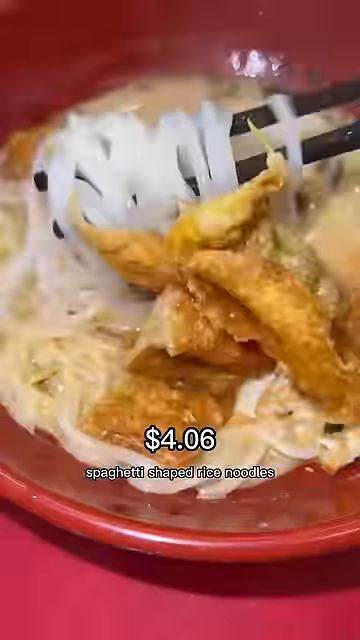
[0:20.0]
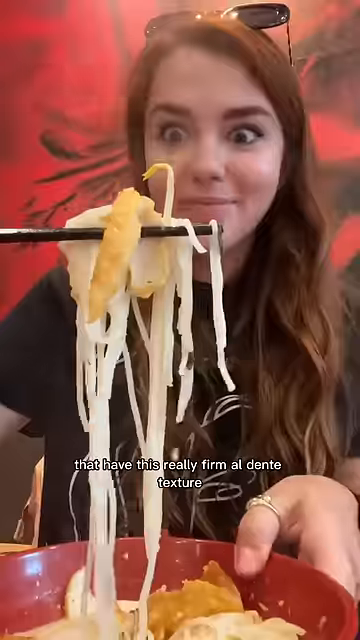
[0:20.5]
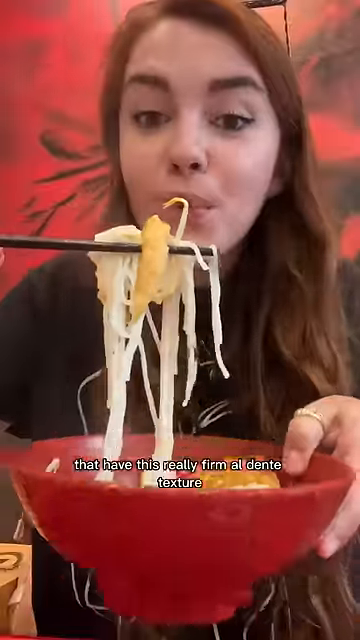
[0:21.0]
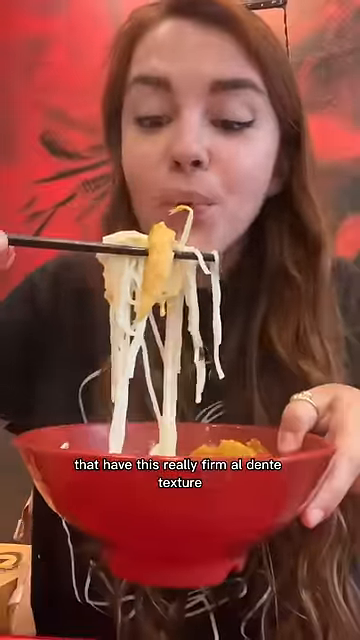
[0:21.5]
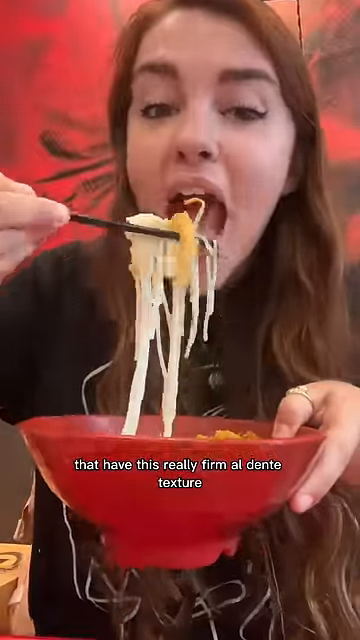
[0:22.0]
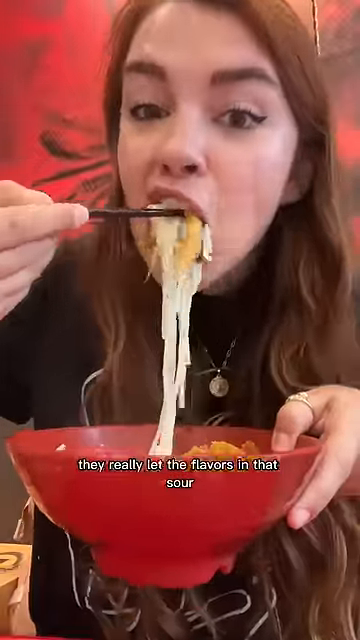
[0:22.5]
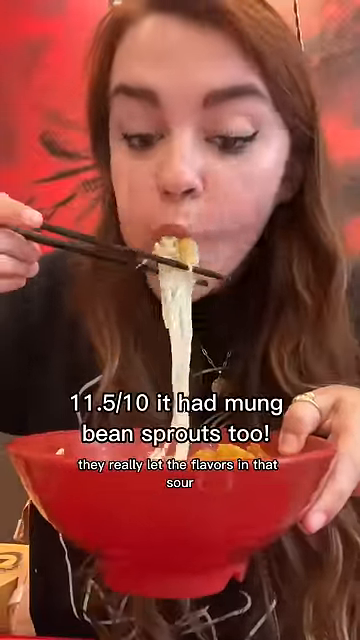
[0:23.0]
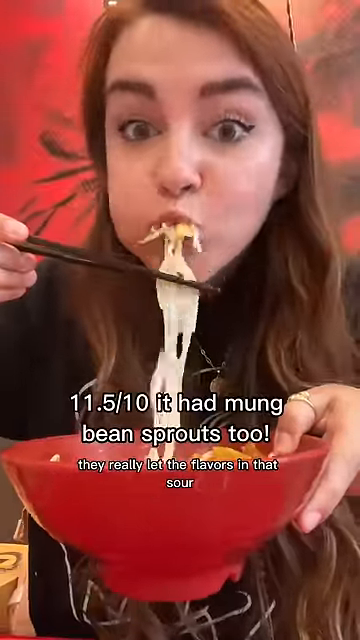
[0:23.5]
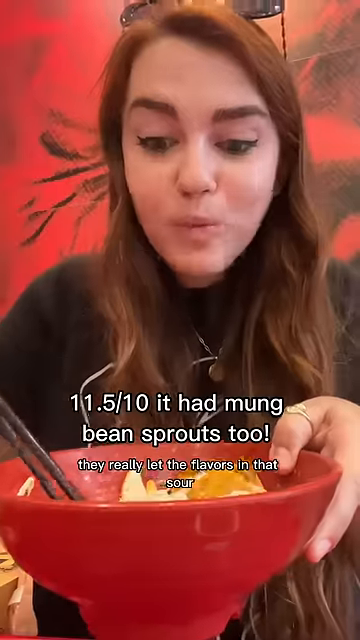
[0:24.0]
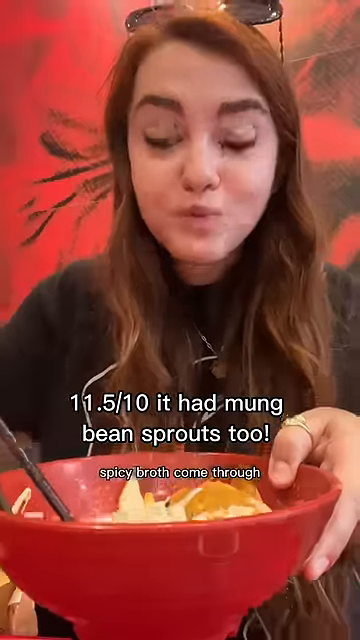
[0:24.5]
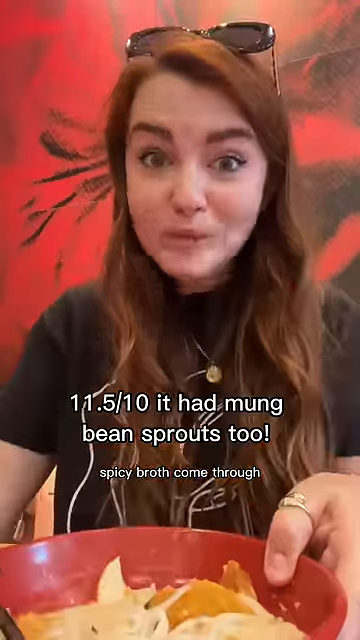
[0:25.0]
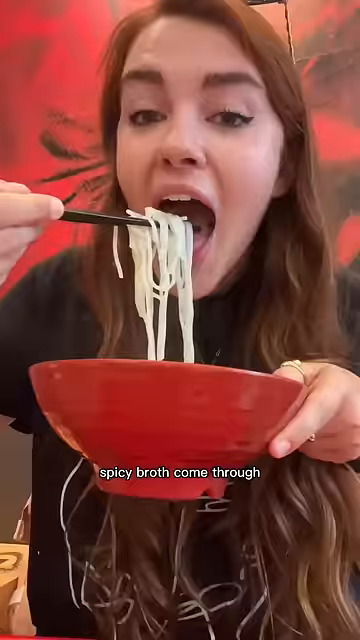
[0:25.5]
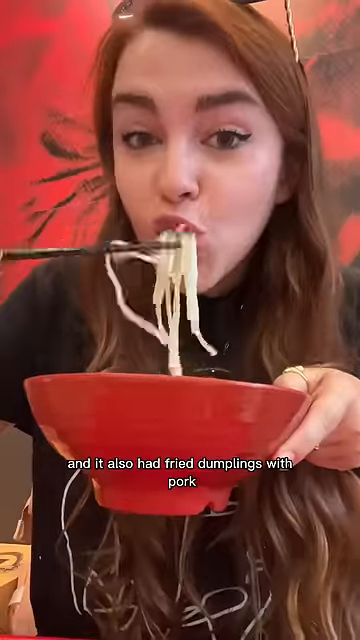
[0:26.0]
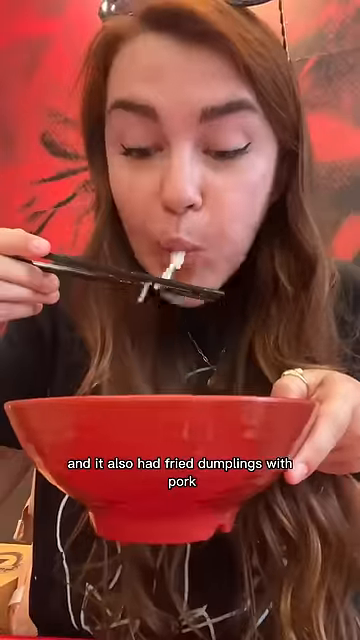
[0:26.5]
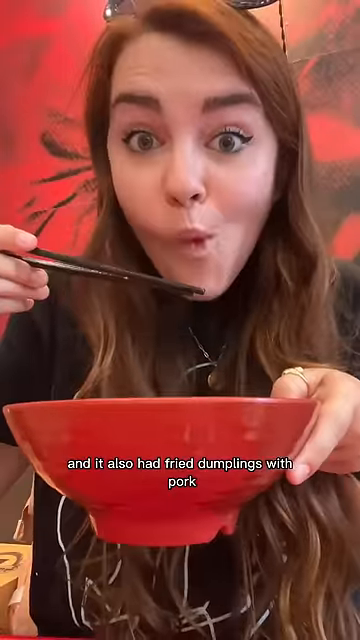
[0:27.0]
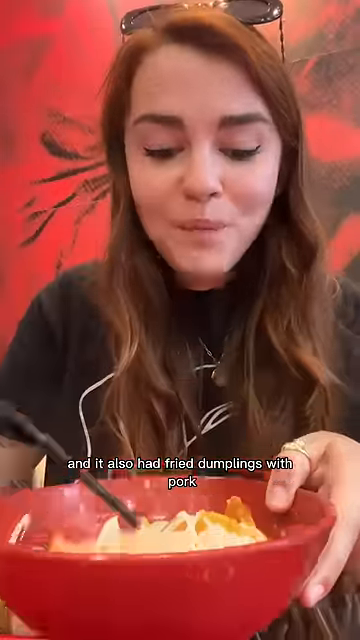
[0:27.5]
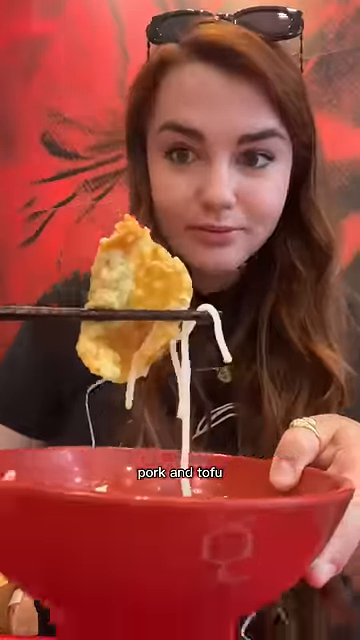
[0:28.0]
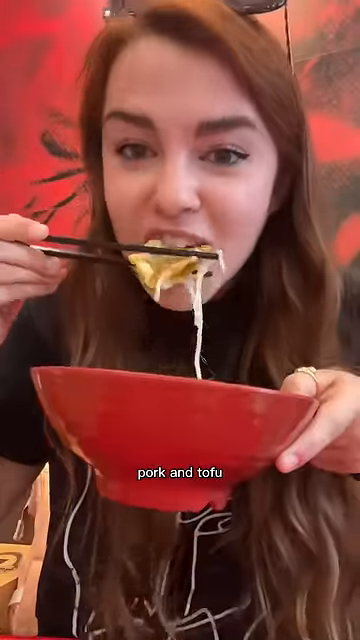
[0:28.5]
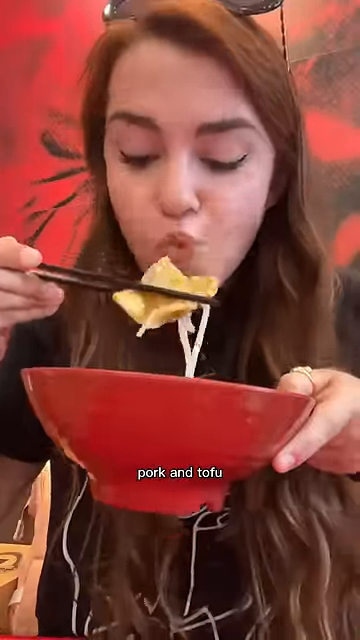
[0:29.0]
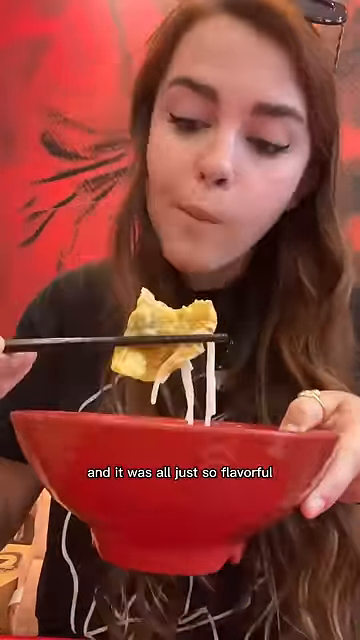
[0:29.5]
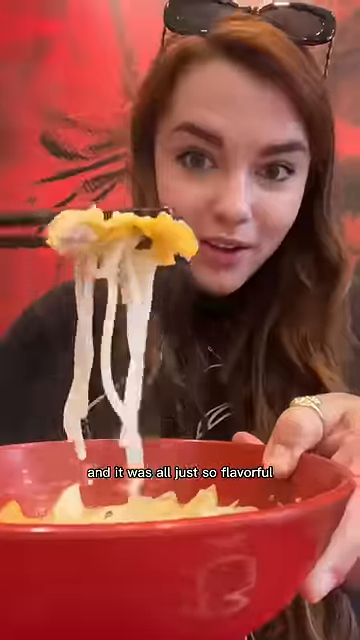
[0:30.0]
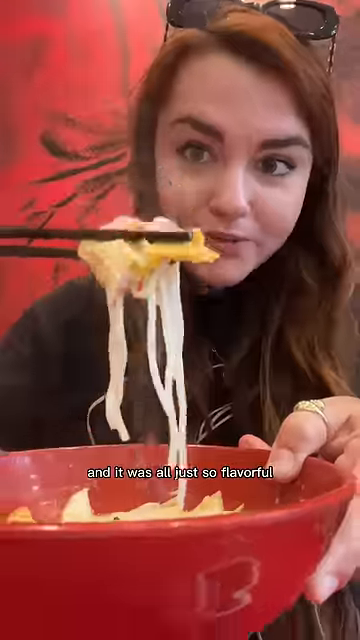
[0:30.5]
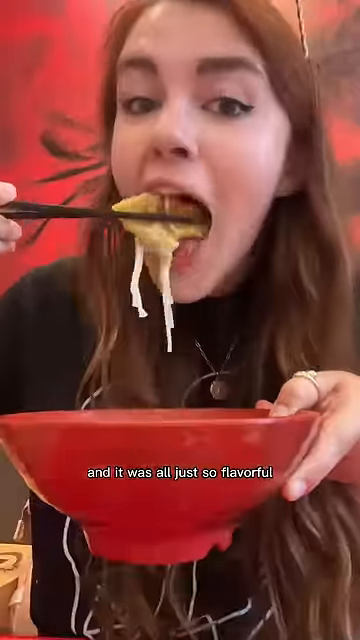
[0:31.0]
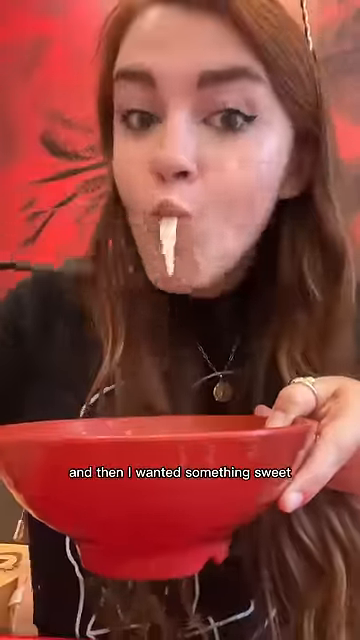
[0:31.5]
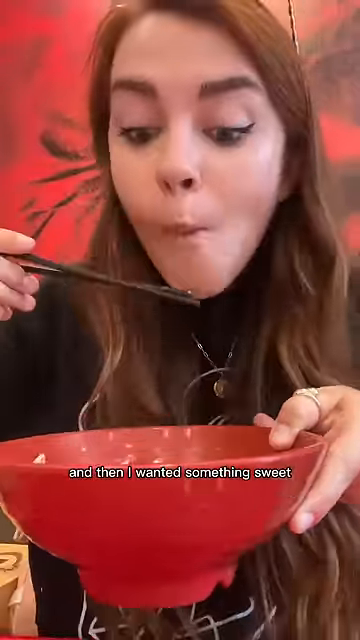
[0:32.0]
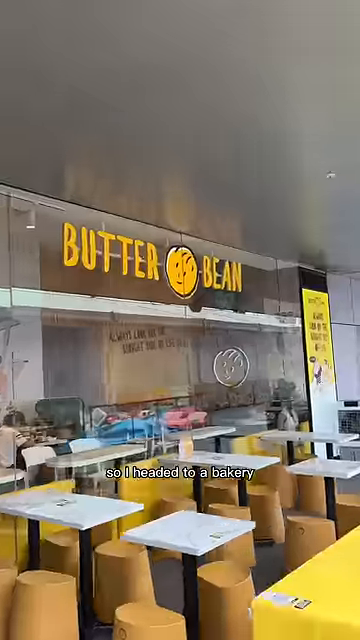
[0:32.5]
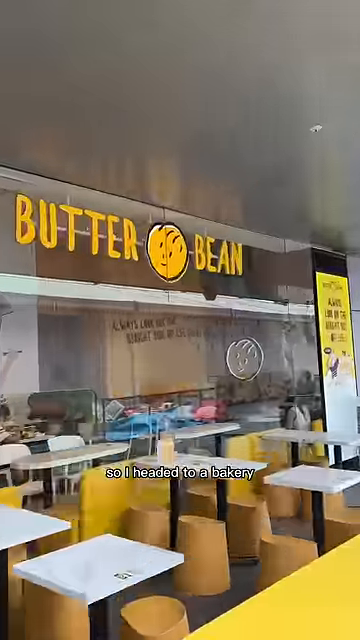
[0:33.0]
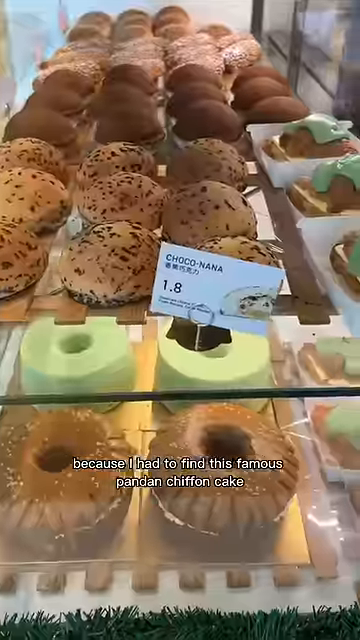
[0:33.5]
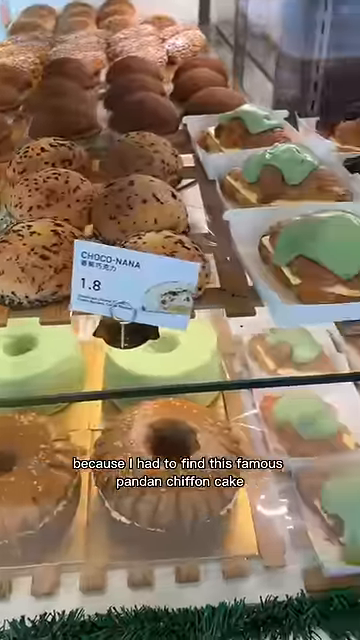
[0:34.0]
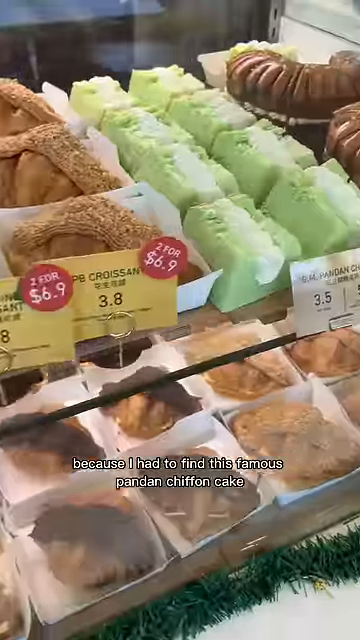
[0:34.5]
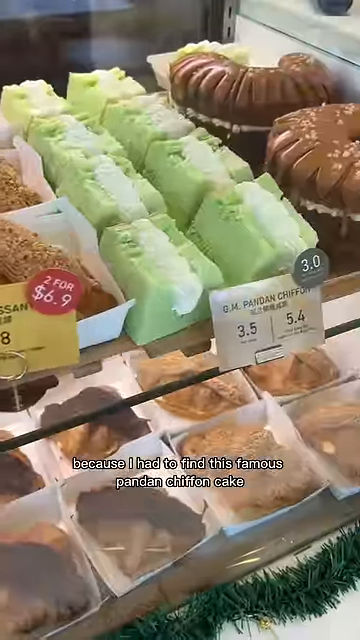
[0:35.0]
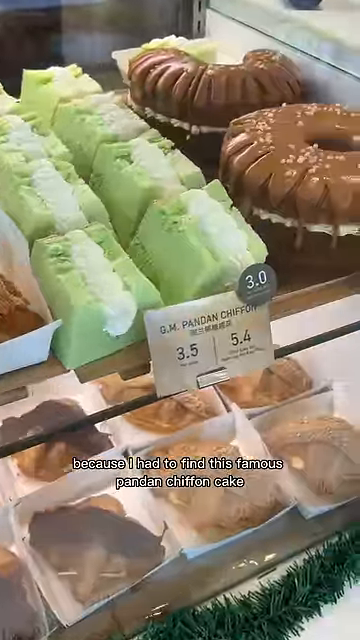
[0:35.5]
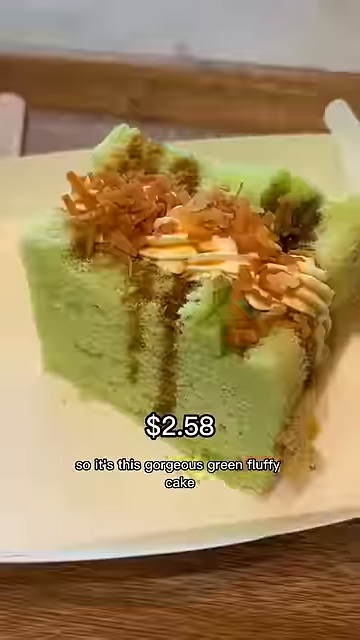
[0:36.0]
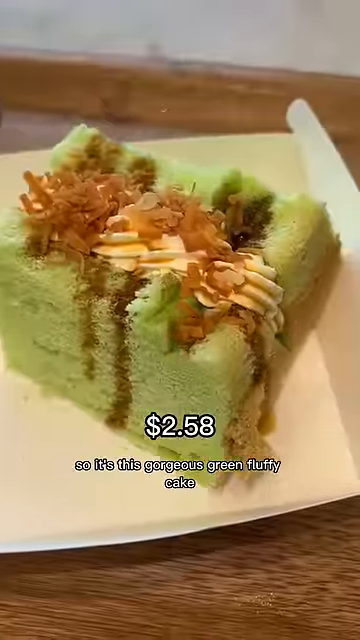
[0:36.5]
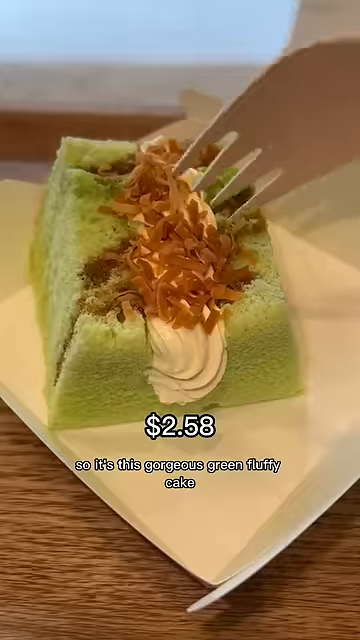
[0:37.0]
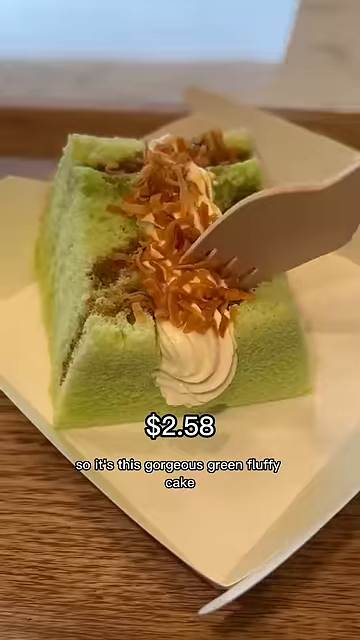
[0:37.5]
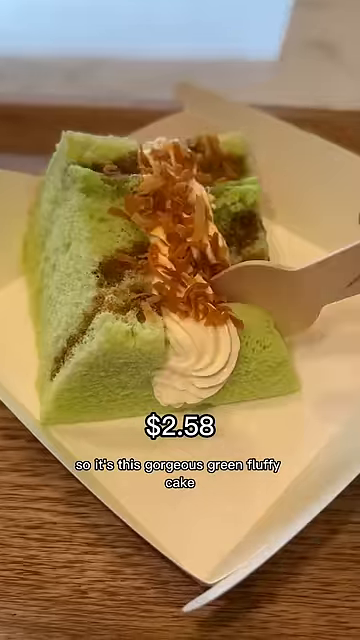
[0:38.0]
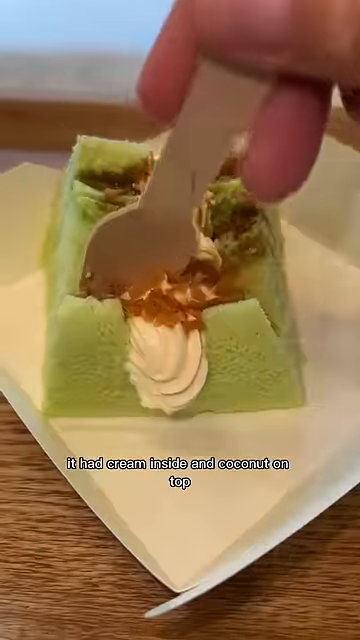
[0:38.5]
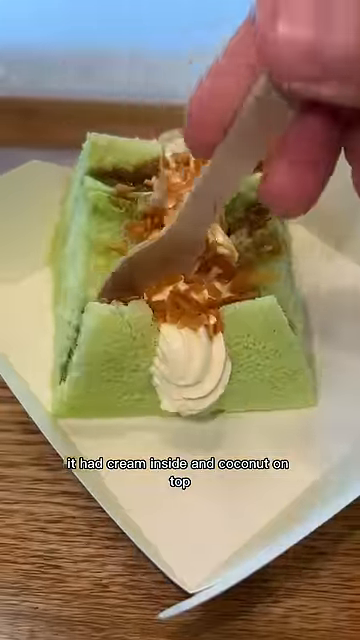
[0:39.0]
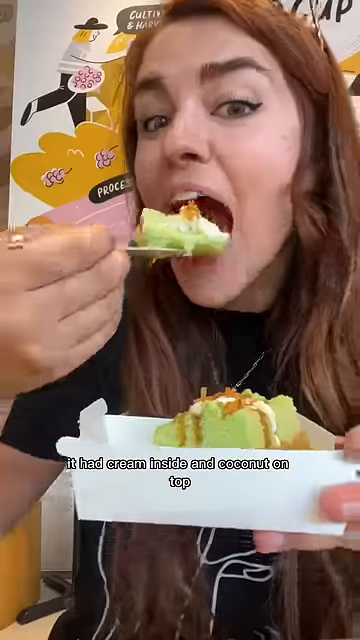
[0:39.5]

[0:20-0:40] The auburn-haired young woman seems to be eating some kind of ramen noodle dish with fried dumplings in Singapore. Text on the screen includes "al dente," "sour," "bean sprouts," "fried dumplings with pork," and "pork and tofu." She then goes to a bakery called the Butter Bean to try a green fluffy cake that looks like some kind of steamed cake with some sort of chiffon cream. Text about the cake is hard to read; it possibly mentions pistachio and apparently says something like "chiffon cake."